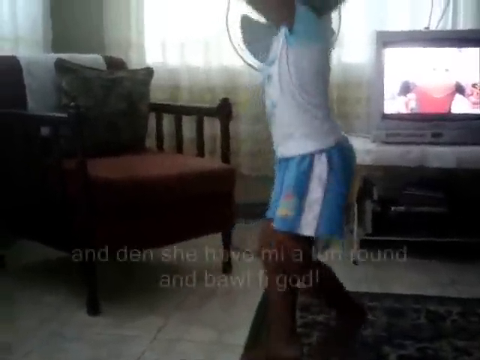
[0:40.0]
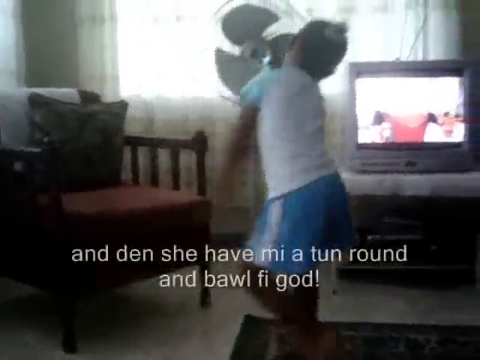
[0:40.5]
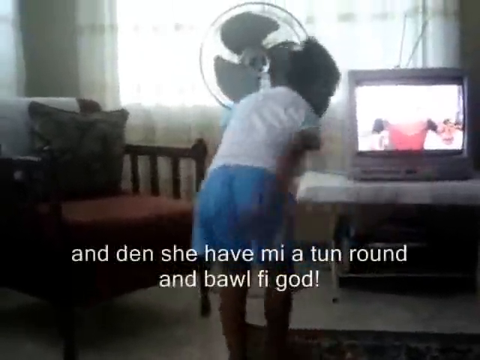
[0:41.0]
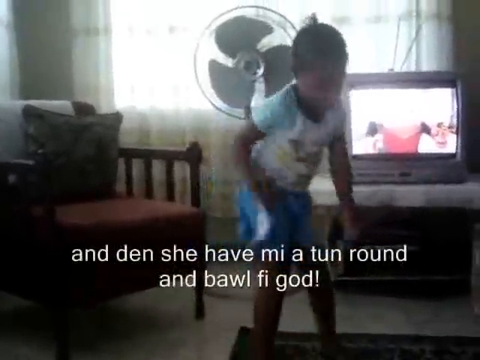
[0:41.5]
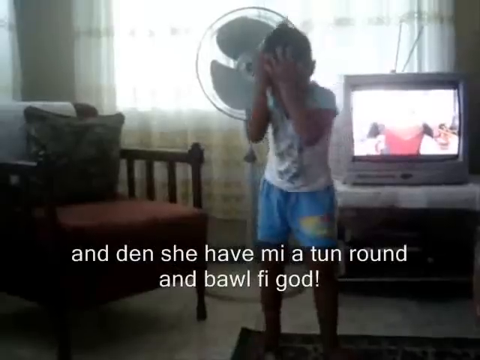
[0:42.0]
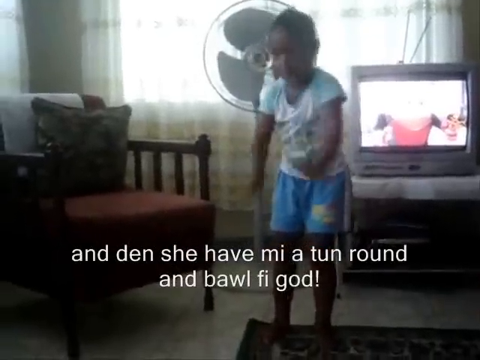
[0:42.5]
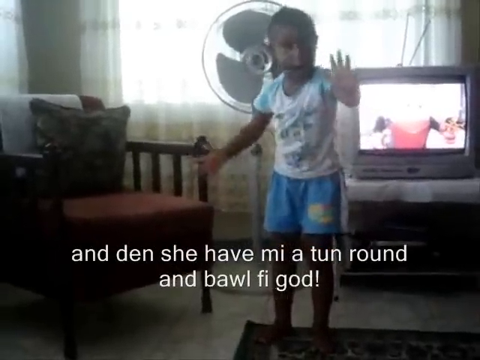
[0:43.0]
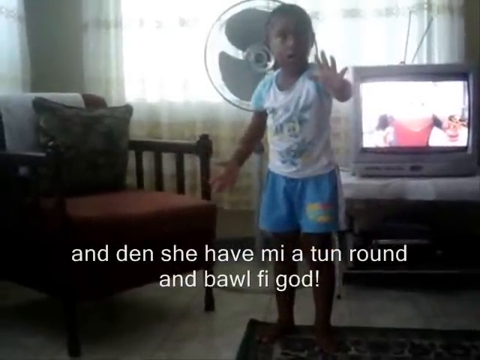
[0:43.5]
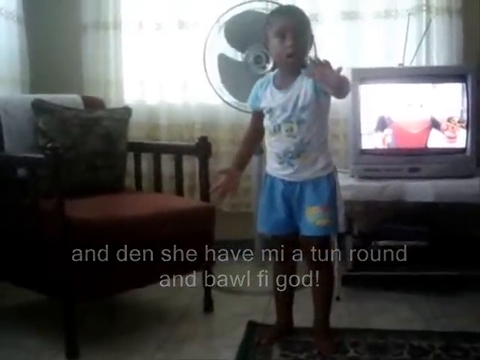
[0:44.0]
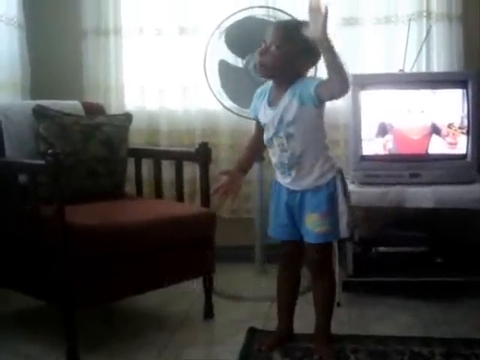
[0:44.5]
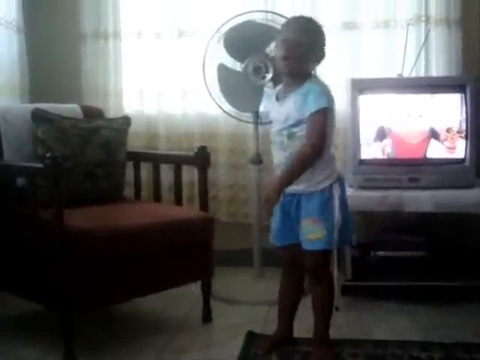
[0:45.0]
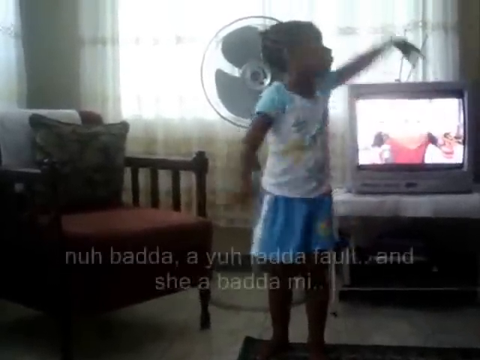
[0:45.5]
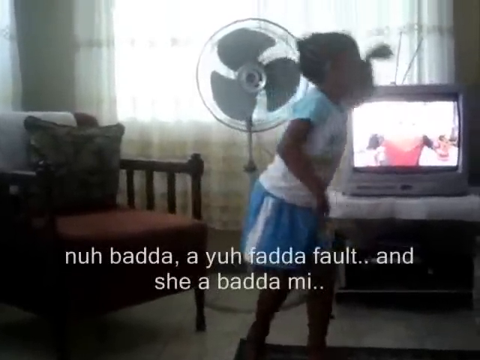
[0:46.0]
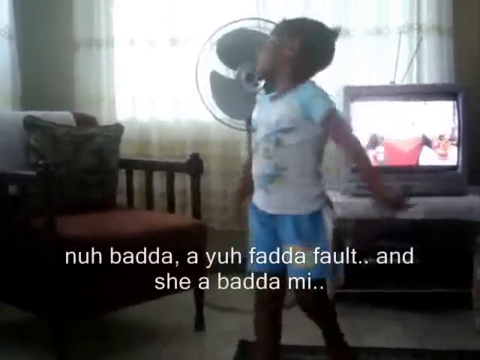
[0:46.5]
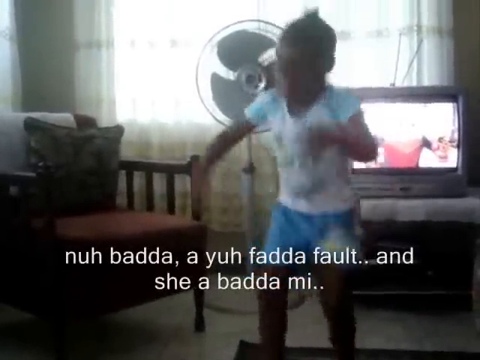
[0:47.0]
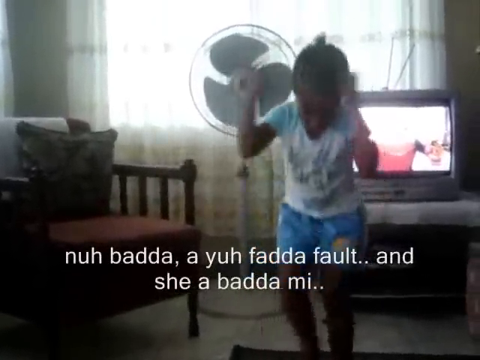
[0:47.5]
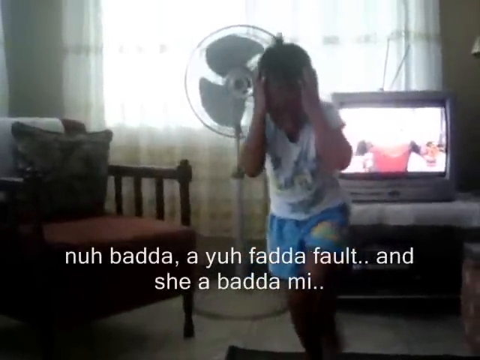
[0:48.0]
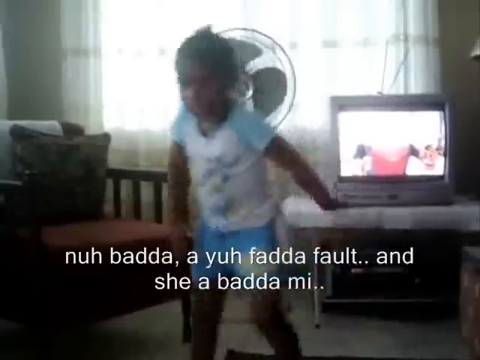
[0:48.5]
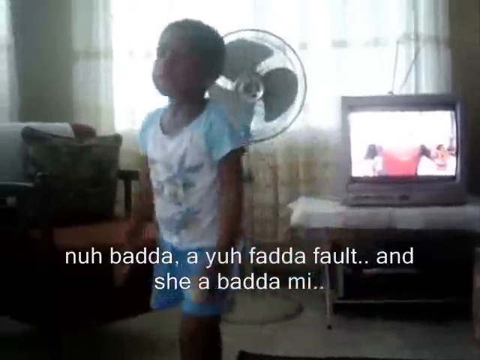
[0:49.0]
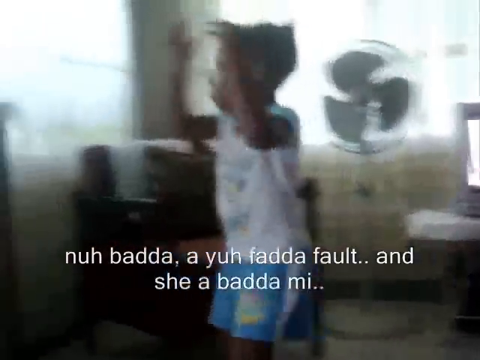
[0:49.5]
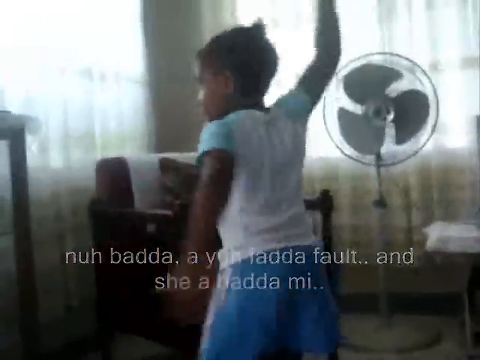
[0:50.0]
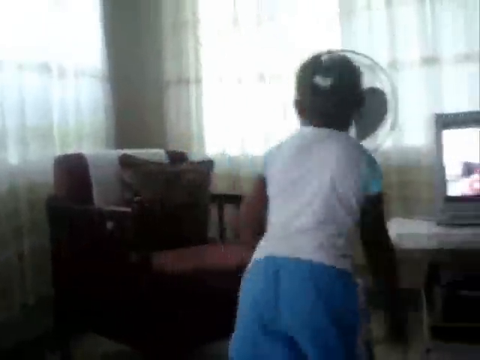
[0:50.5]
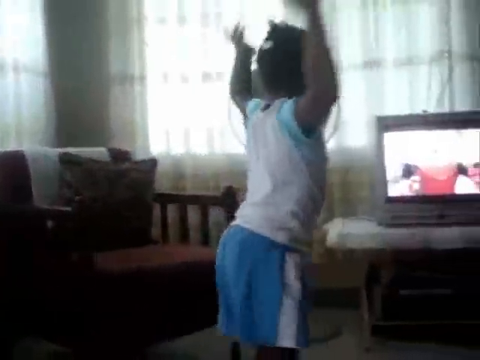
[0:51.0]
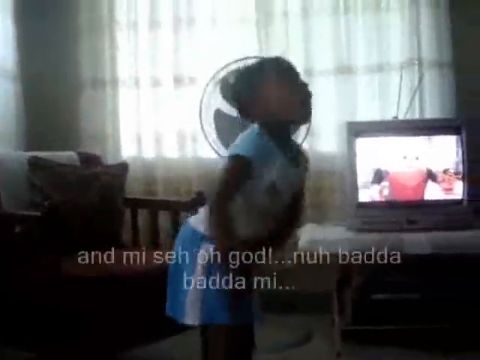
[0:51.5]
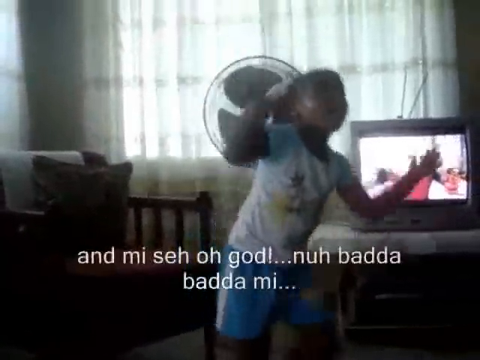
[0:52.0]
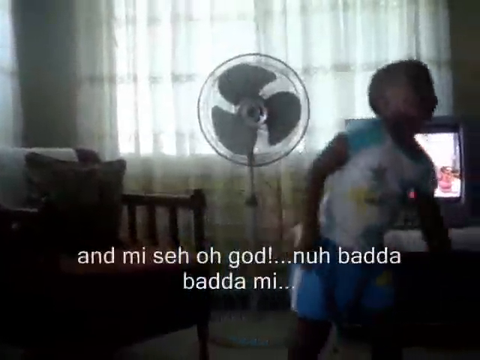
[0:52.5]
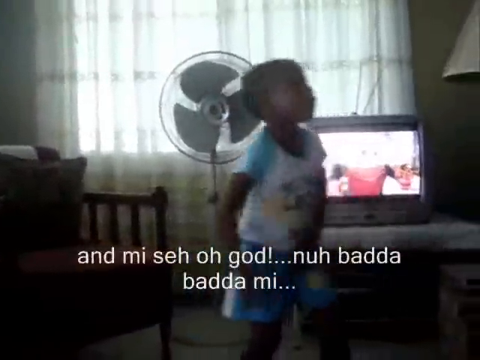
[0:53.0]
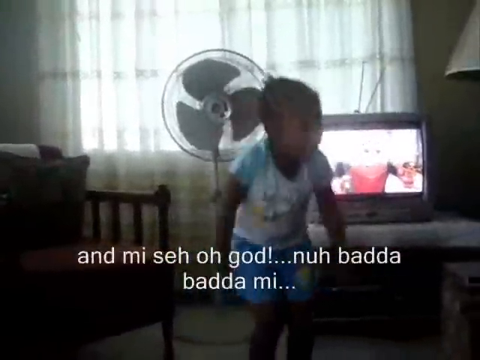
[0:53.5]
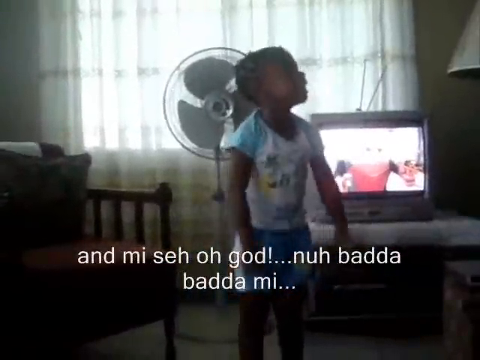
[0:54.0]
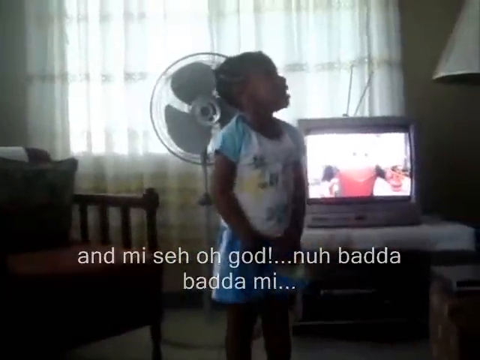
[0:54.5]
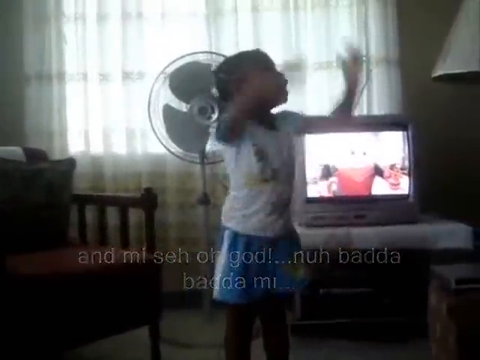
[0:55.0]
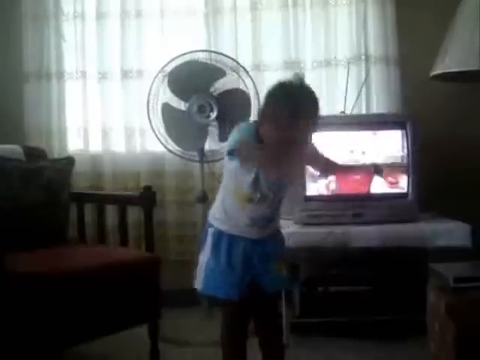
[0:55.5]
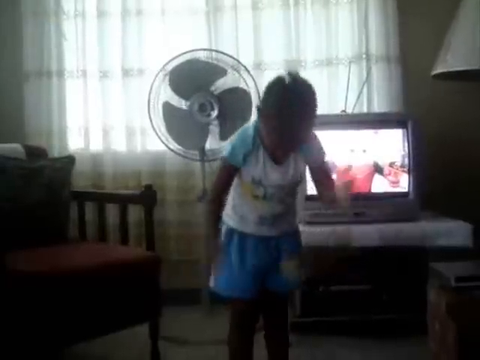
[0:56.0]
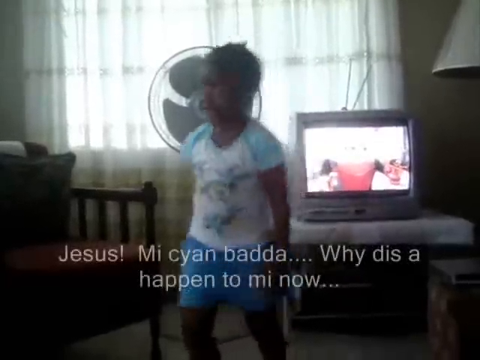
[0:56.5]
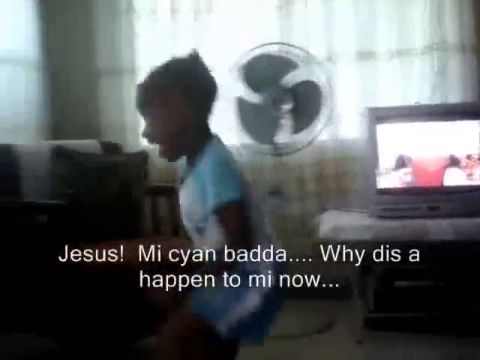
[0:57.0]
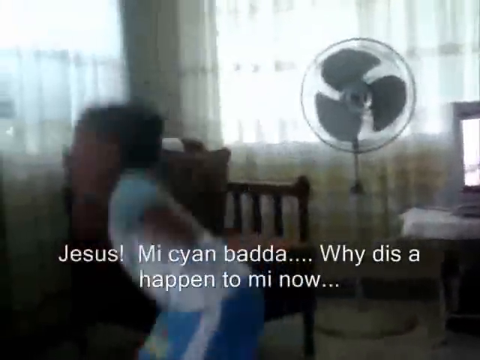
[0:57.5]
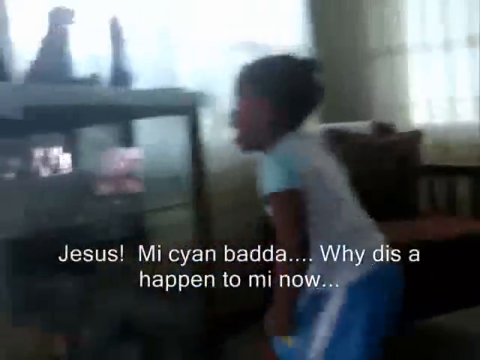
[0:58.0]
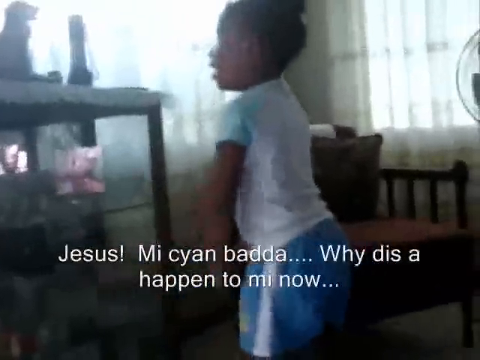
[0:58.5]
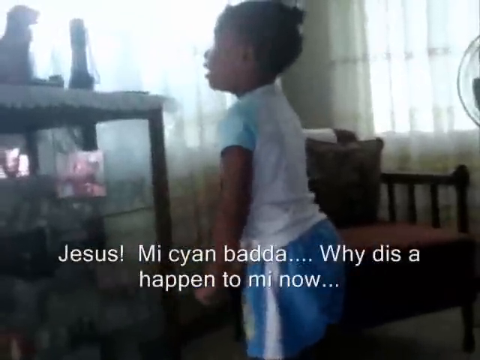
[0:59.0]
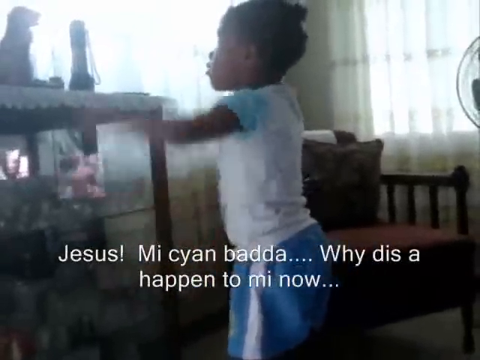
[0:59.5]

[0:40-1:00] White subtitles take up a decent-sized portion of the bottom of the screen, in partial English mixed with some other language or slang. They begin with "and den she have mi a tun round and bawl fi god!" The girl covers her face with both hands, then, with her mouth wide open, stretches out her left arm and slaps that arm down toward the ground while speaking more, as the subtitle reads "nuh badda, a yuh fadda fault and she a badda mi." As she talks, she keeps frantically waving her arm up and down and slamming her hands toward the ground as if screaming. She stays in the same room and appears quite upset, her body going up and down as she raises both arms and then puts them down in a frantic motion.